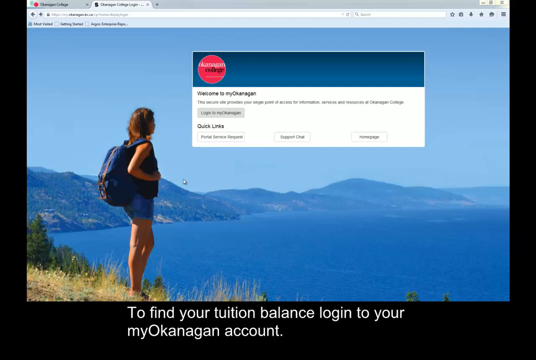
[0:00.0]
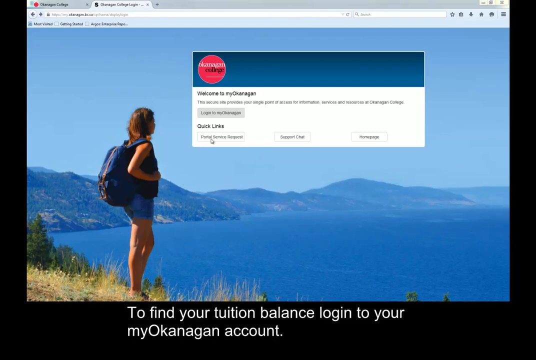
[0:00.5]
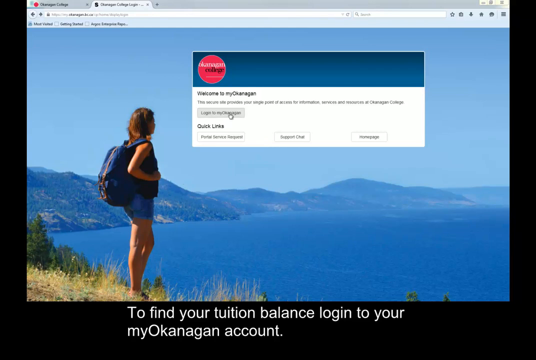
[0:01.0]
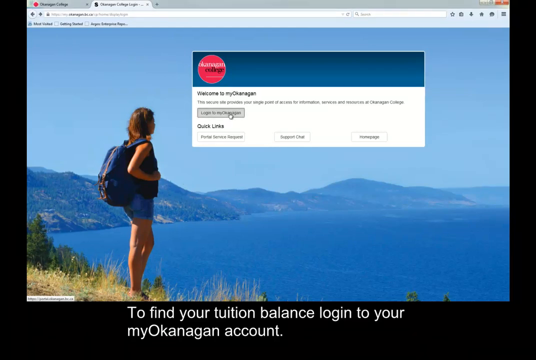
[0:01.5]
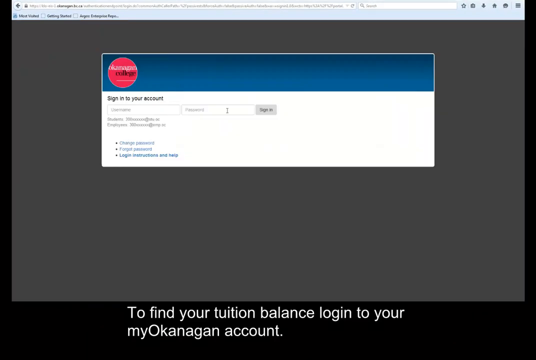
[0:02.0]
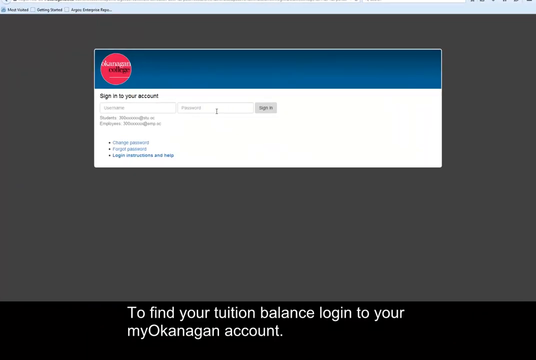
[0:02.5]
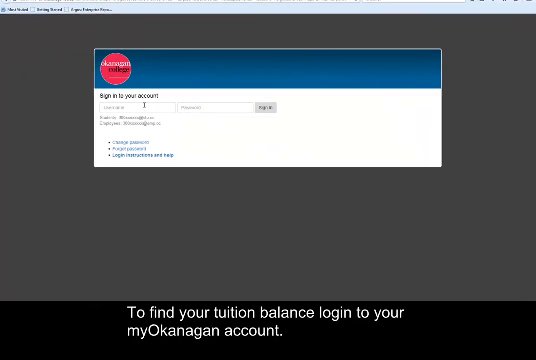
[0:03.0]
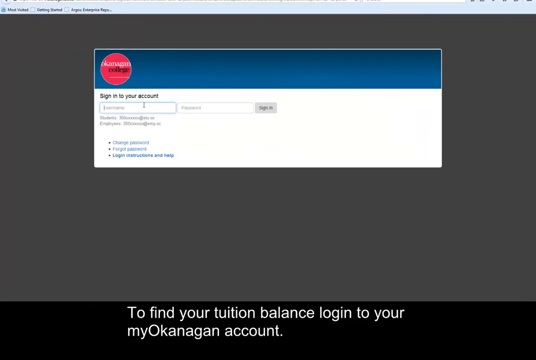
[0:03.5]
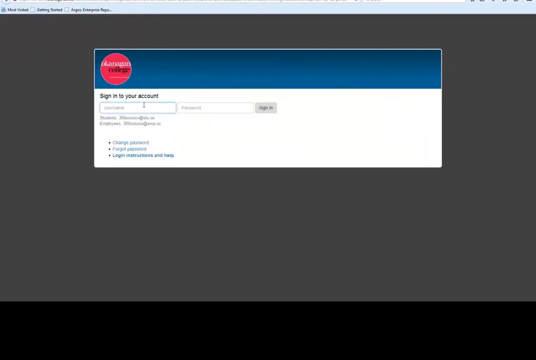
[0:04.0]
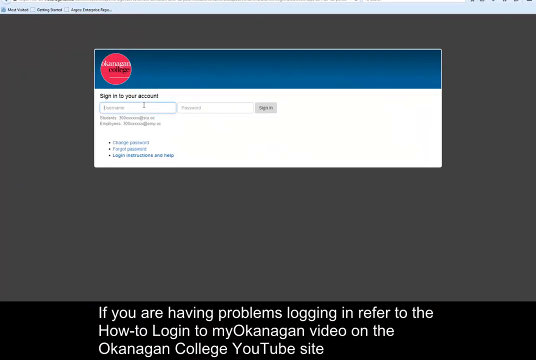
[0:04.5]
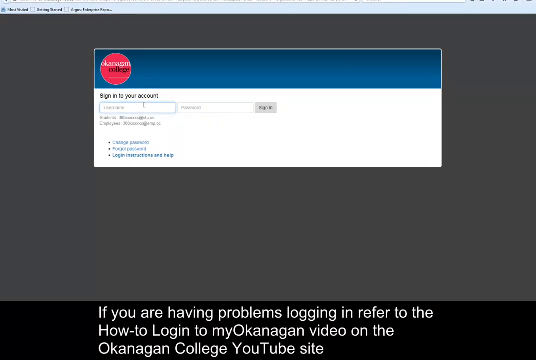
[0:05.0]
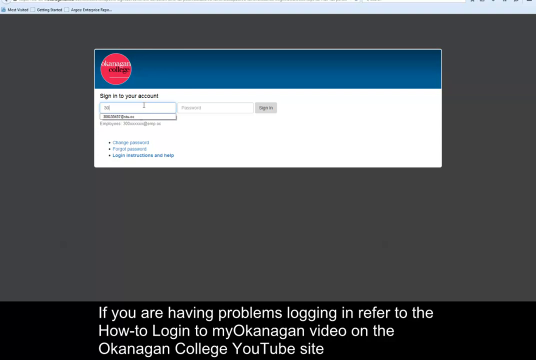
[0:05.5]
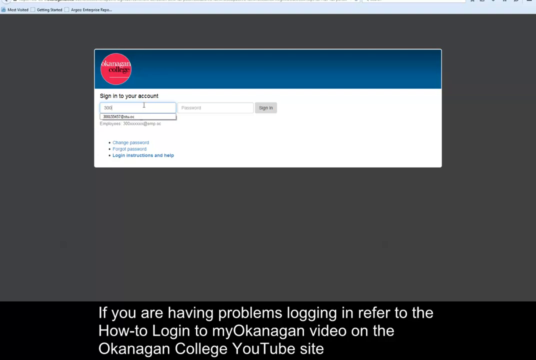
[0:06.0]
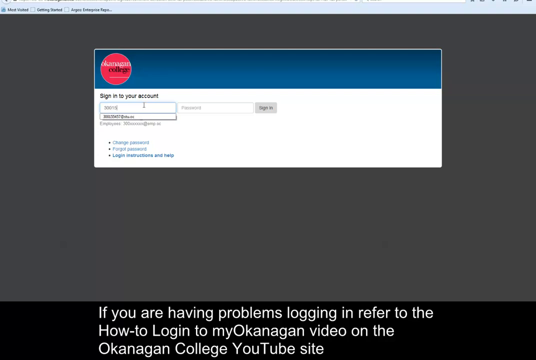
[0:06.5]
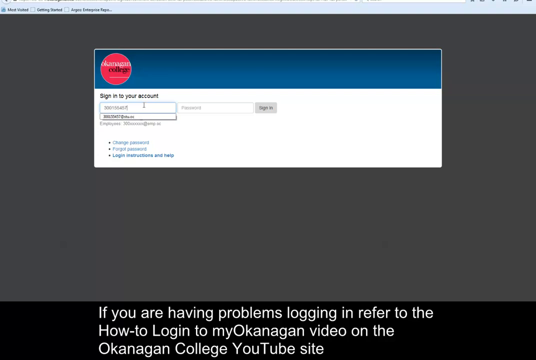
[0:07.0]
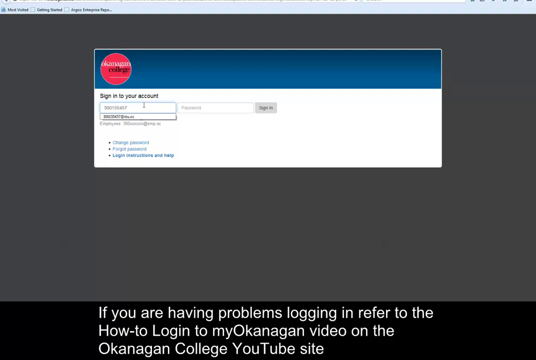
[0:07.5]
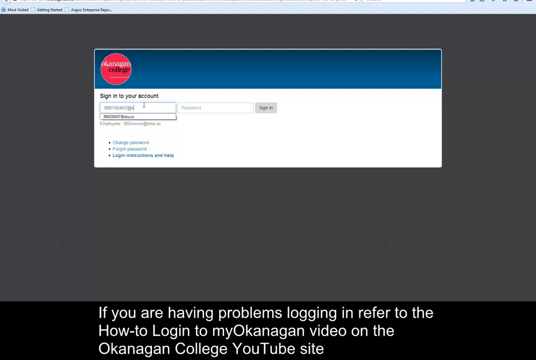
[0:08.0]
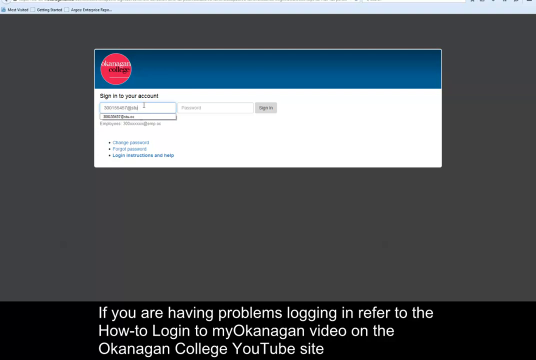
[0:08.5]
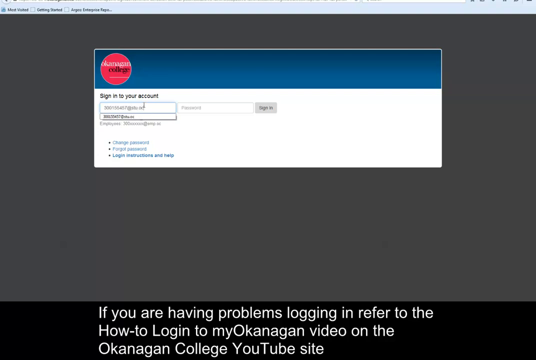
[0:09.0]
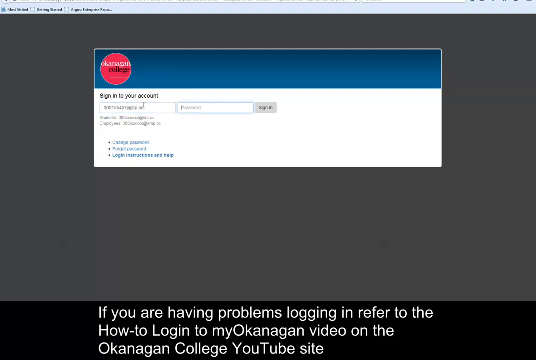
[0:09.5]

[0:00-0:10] The video opens on a white woman standing on a cliff with a poster in front of her. She quickly disappears, leaving only the poster, which reads "Login" and "sign into your account." There also seem to be options that say "change password" and "forgot password." A logo on the poster is red and hard to read; it possibly says Okanagan Account or Okanagan College. A caption below mentions finding your tuition balance and reads "login to your Okanagan Balance." Another caption then appears: "If you are having problems logging in refer to the how to log into my Okanagan video on the Okanagan College YouTube website."